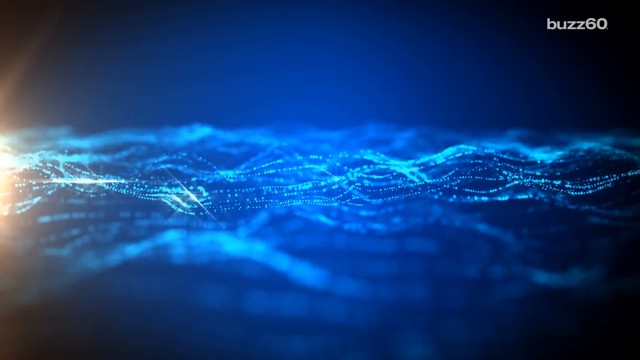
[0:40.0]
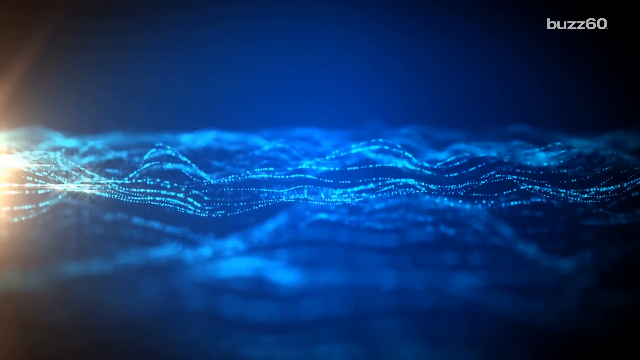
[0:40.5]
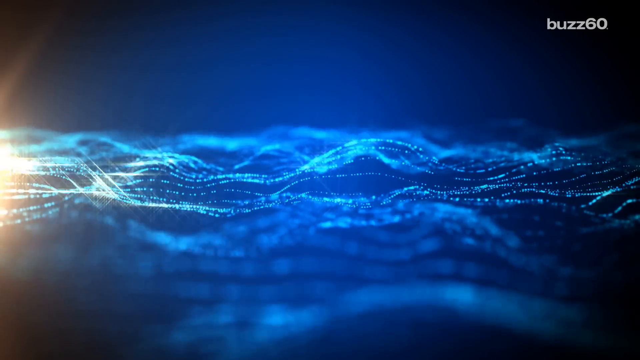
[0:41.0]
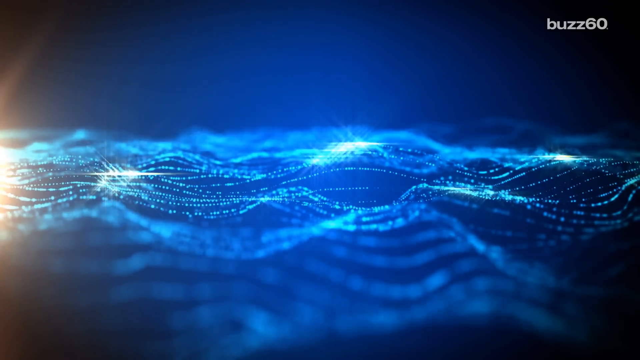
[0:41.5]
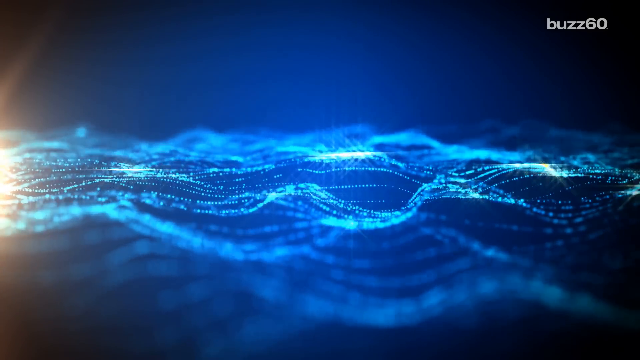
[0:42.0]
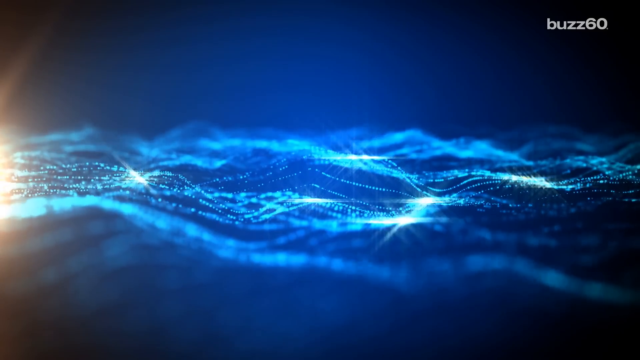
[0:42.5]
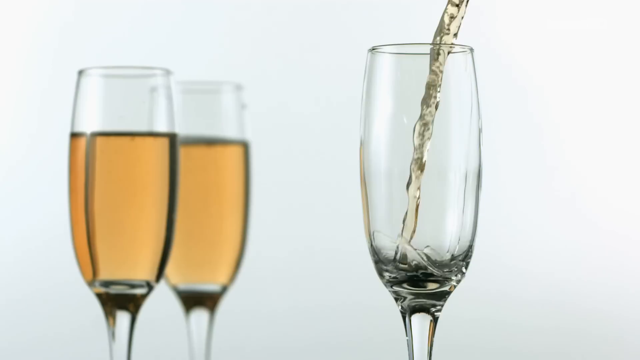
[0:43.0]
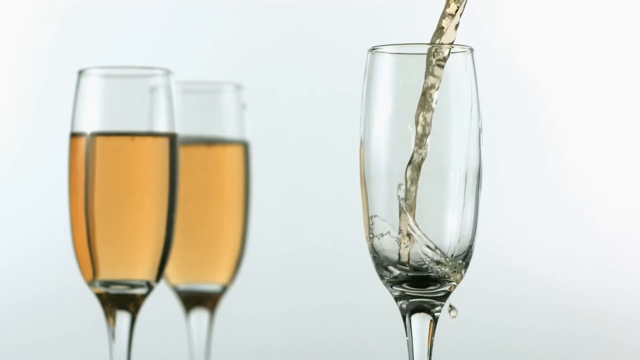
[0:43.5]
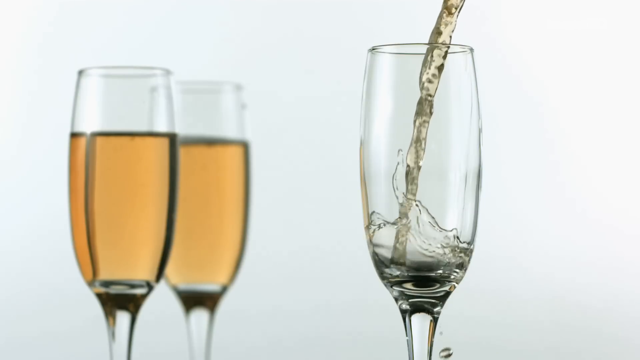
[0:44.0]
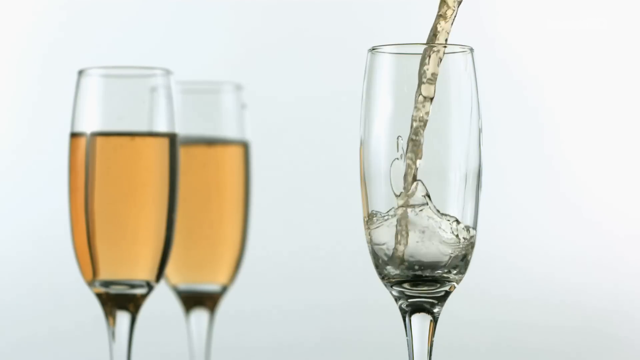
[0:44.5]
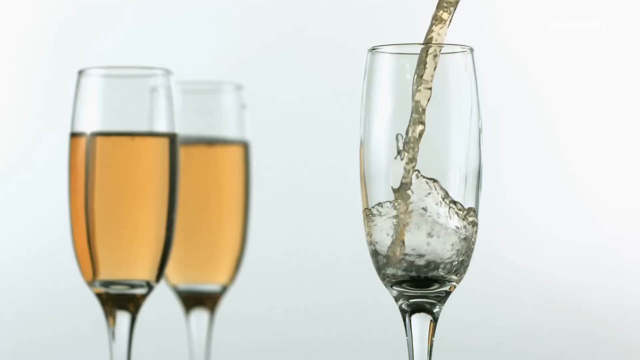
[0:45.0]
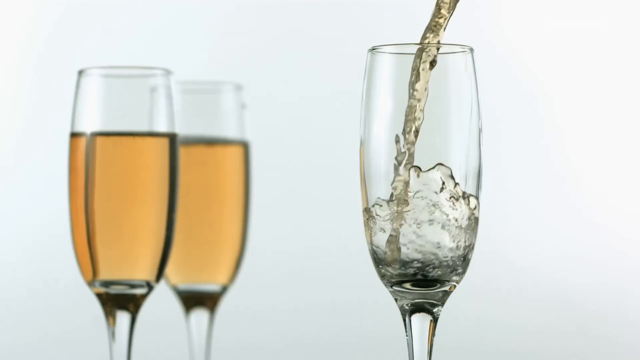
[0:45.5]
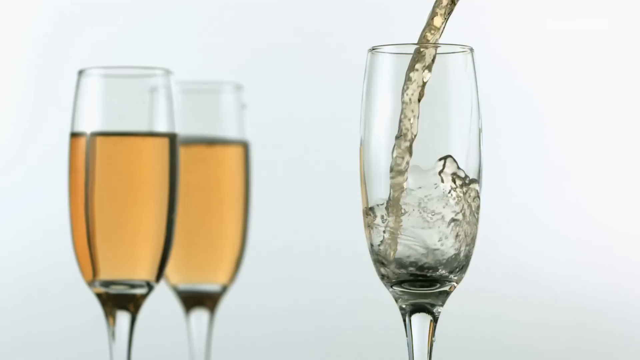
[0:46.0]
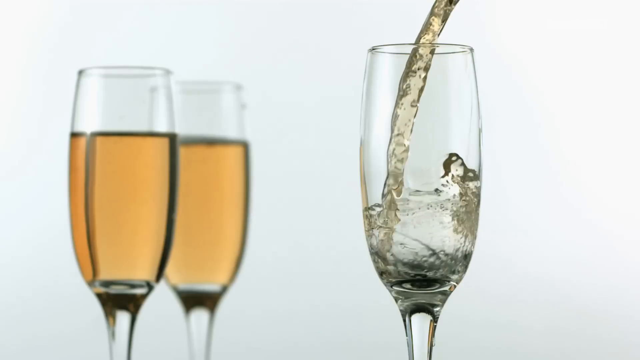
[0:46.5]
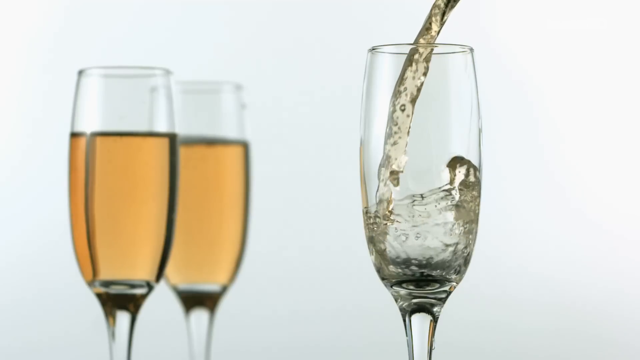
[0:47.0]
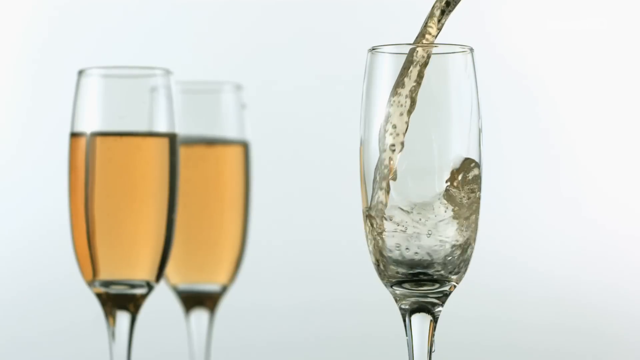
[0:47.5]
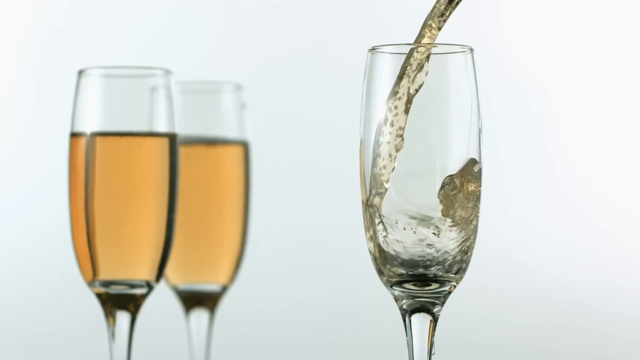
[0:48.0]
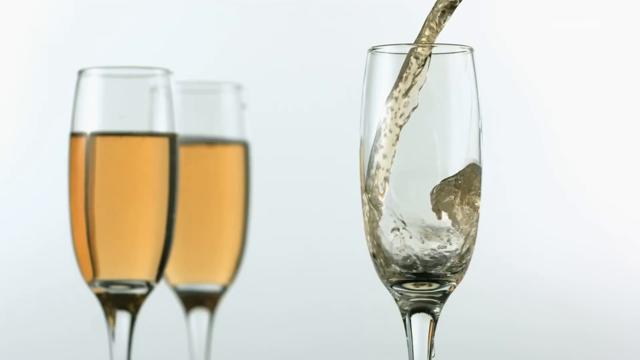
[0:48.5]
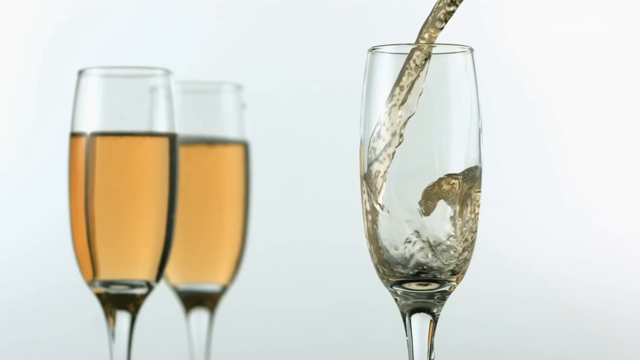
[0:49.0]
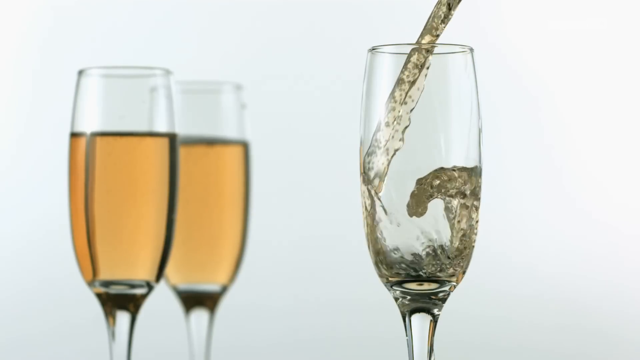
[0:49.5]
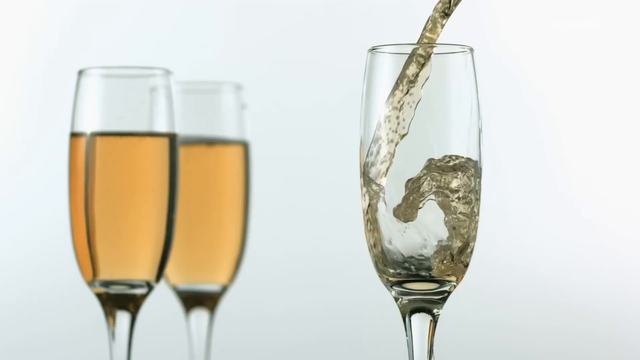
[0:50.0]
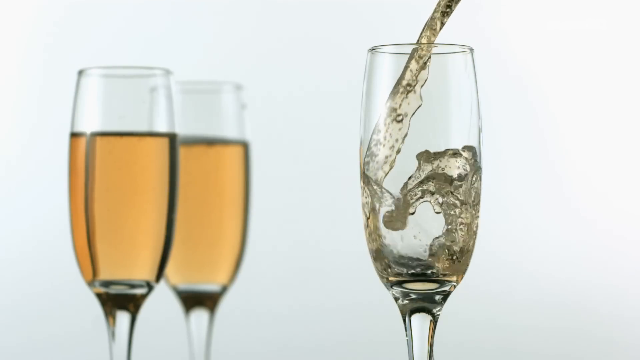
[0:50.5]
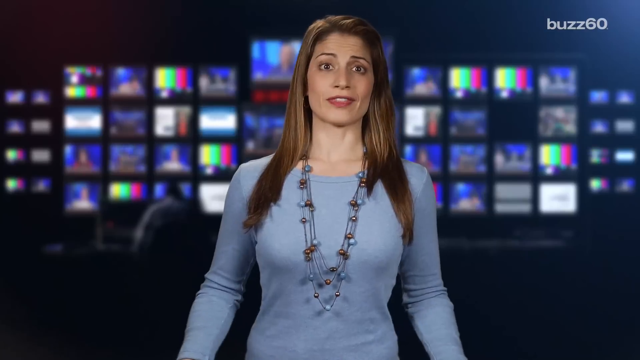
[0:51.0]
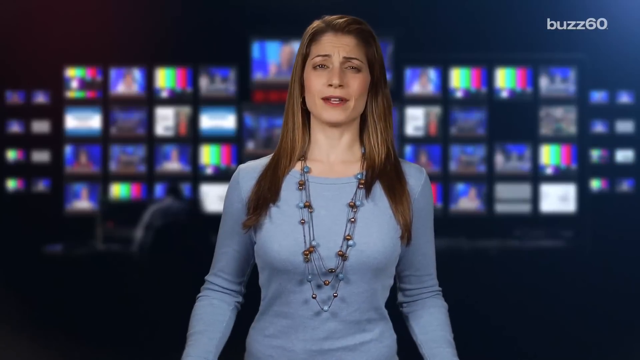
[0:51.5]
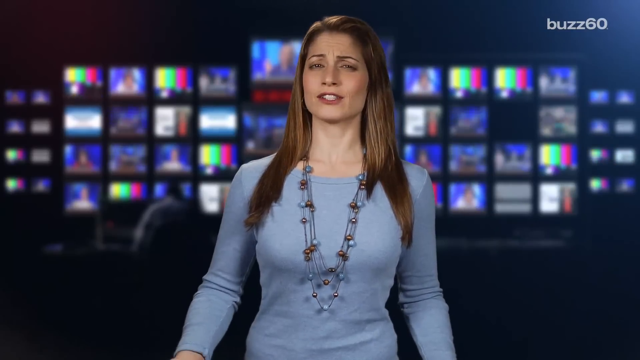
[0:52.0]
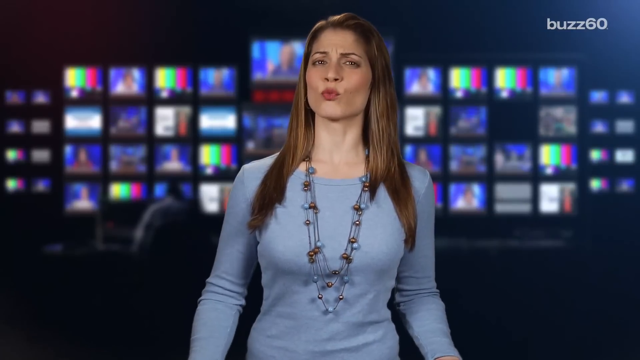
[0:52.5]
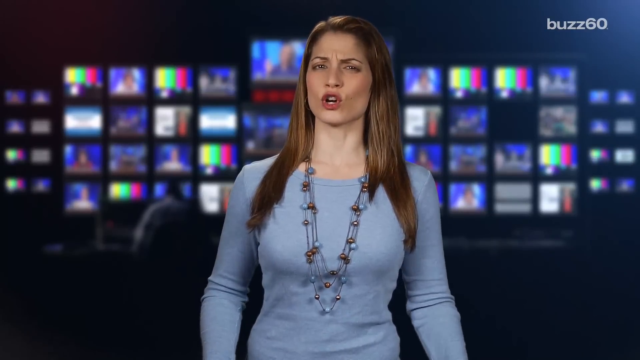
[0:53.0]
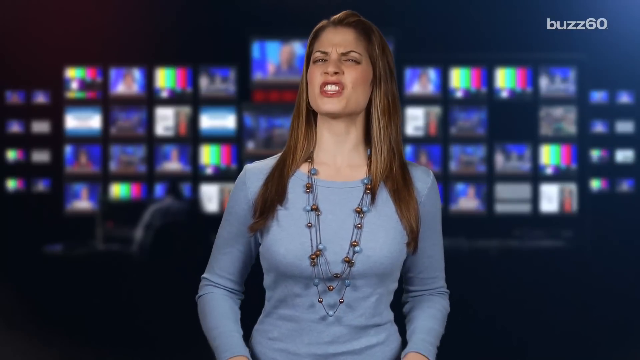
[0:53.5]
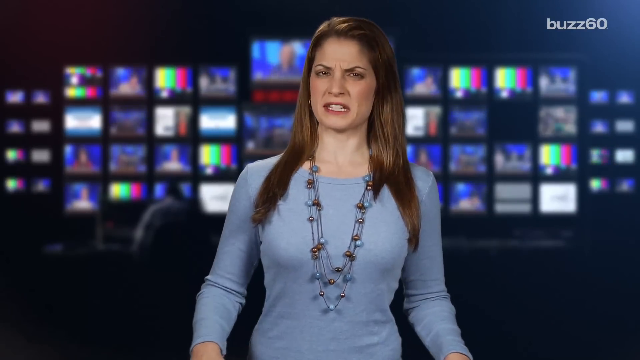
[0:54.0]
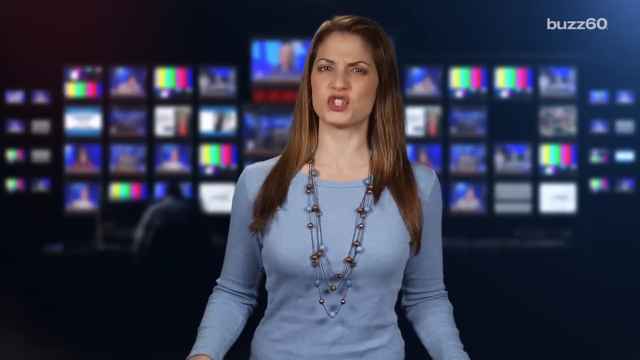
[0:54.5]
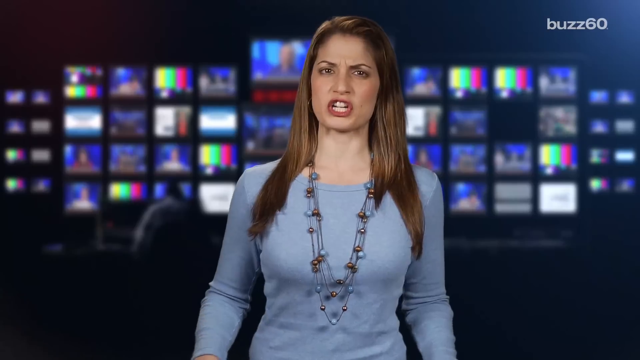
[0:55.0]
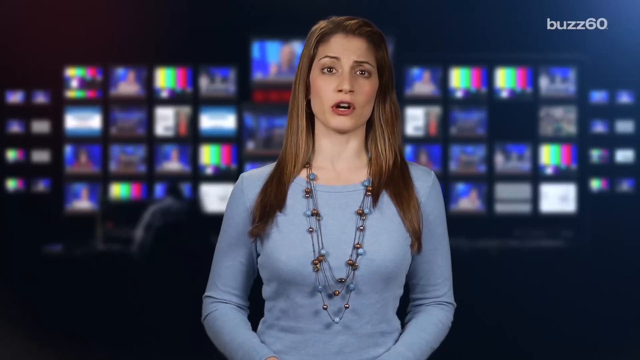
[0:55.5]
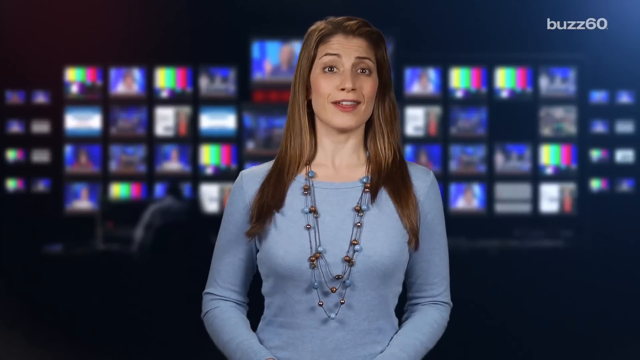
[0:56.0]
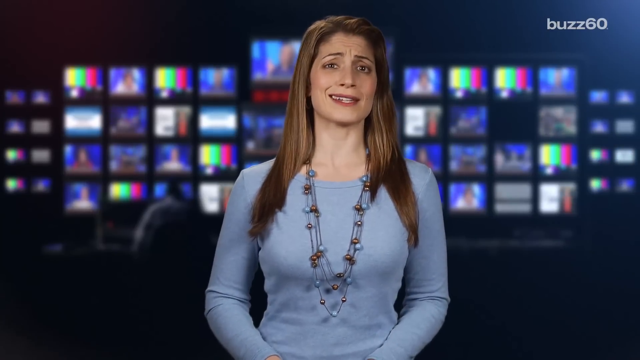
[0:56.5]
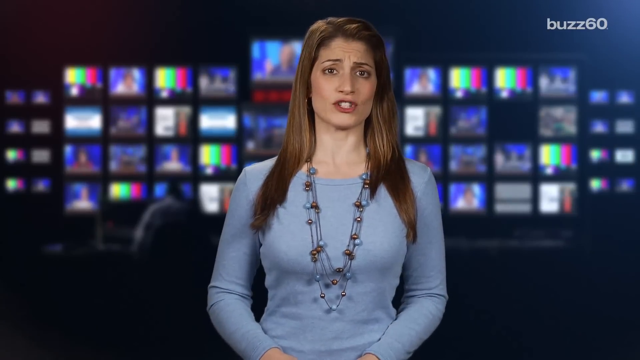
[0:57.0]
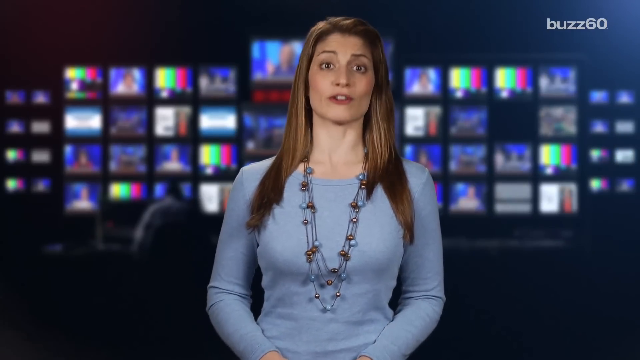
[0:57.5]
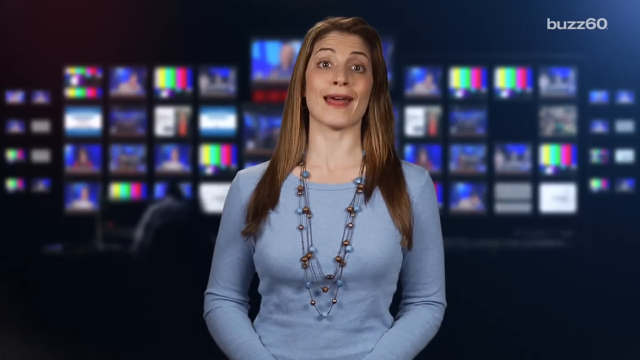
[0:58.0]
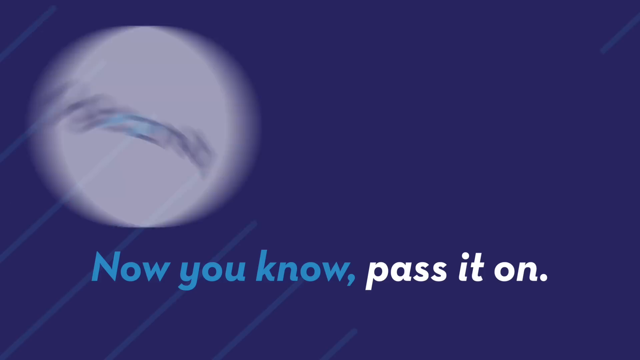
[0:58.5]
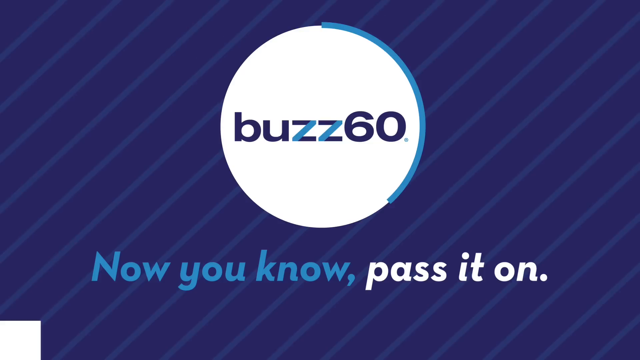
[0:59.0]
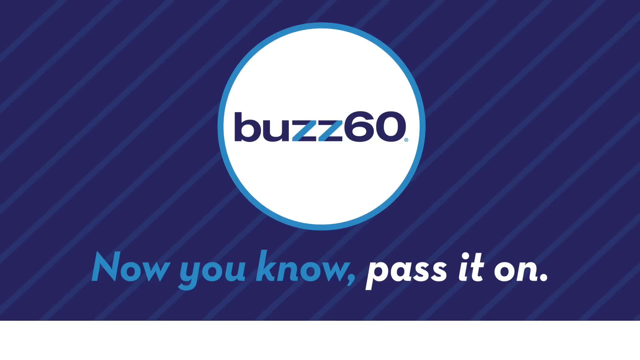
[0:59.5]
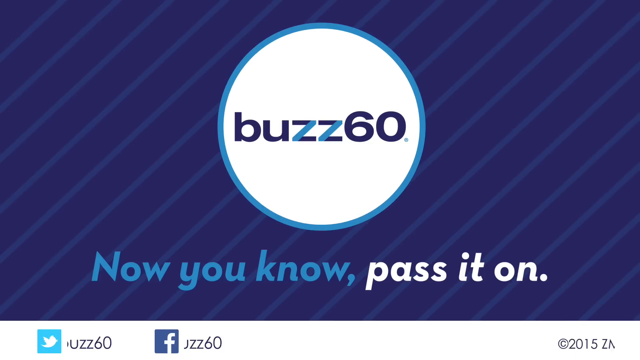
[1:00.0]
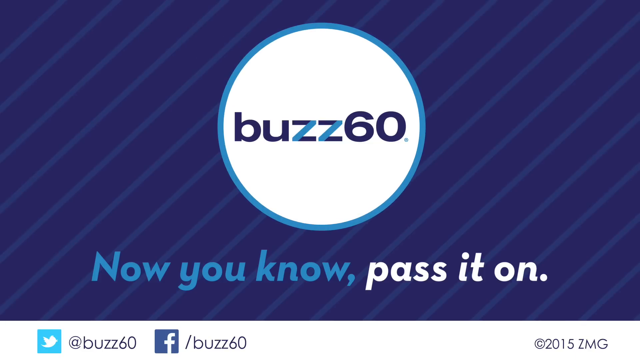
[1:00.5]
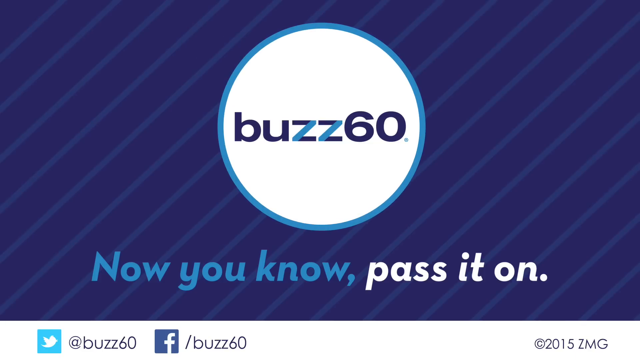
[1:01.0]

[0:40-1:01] There are three cups, and something that seems to be a vaporous liquid is put on top of them. The woman presents the news, talking and seeming curious. There are a lot of lights, with what seems to be cloud, a little bit blue, and a little bit of lighting.